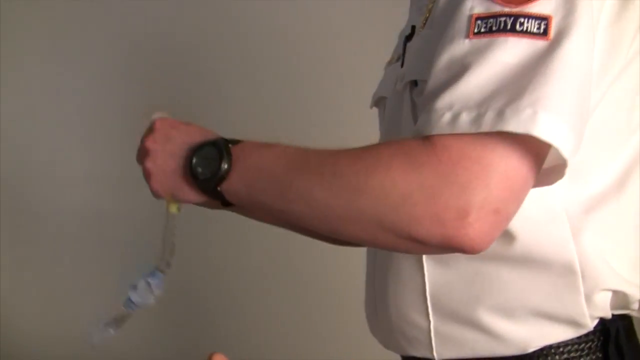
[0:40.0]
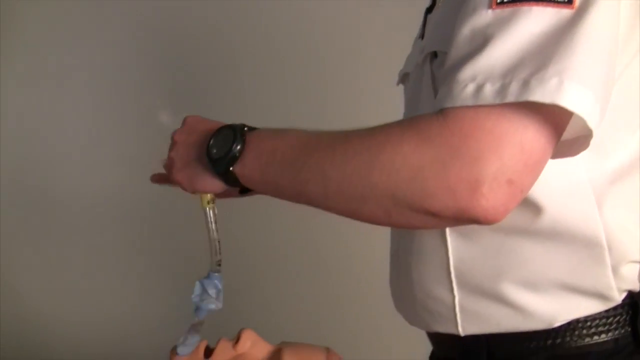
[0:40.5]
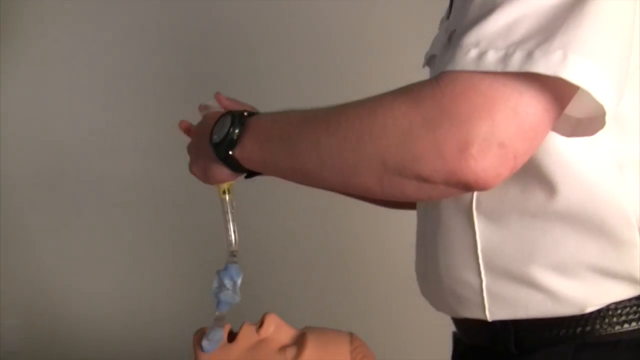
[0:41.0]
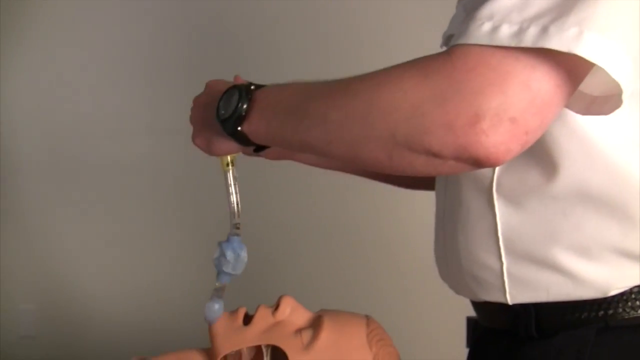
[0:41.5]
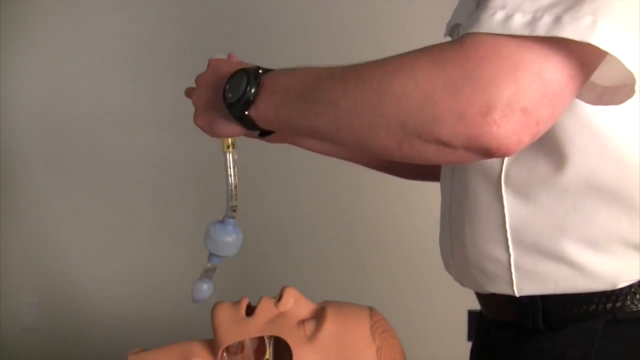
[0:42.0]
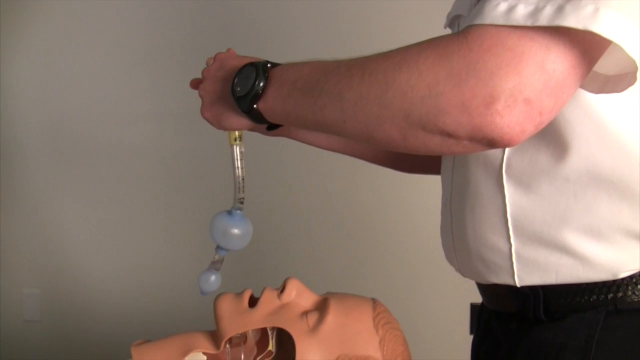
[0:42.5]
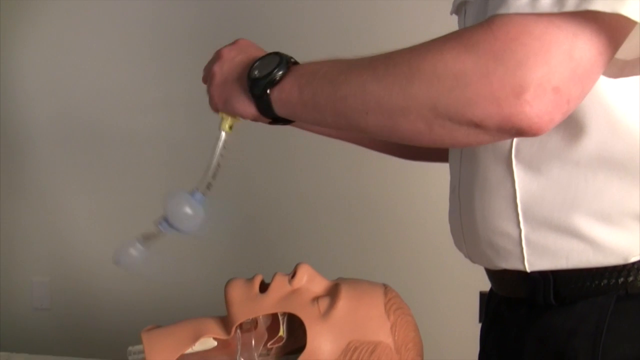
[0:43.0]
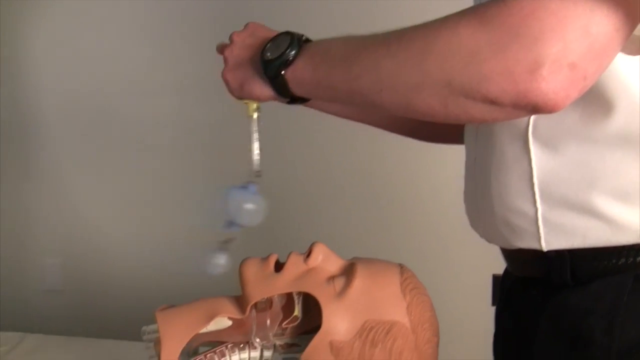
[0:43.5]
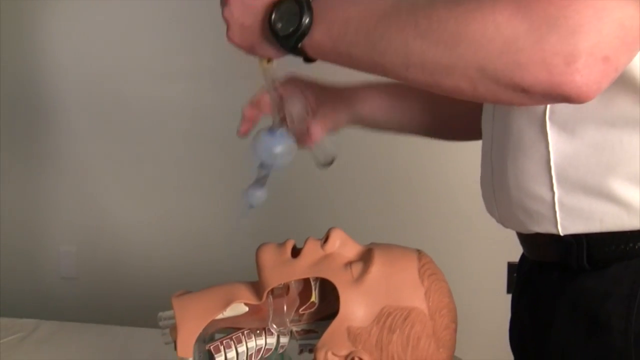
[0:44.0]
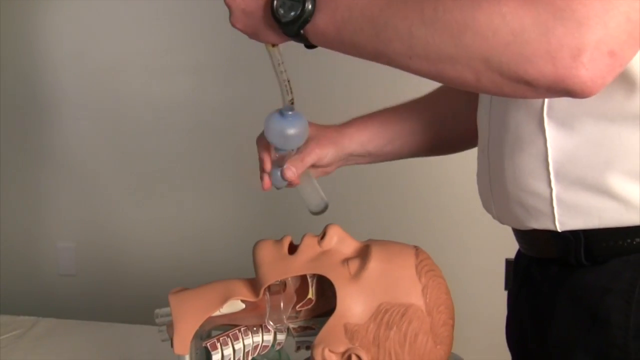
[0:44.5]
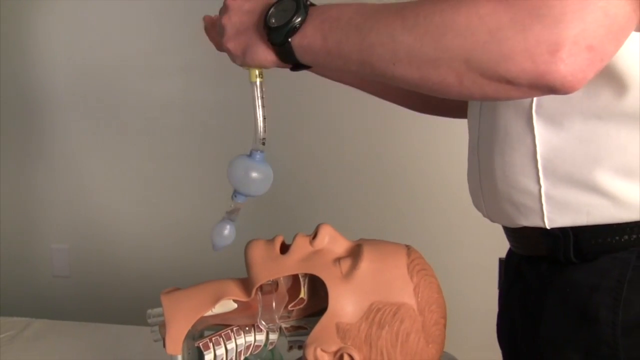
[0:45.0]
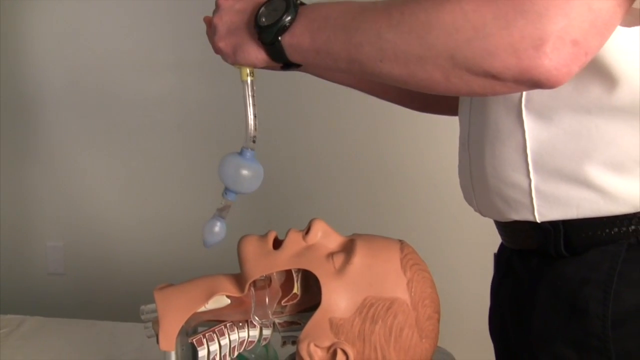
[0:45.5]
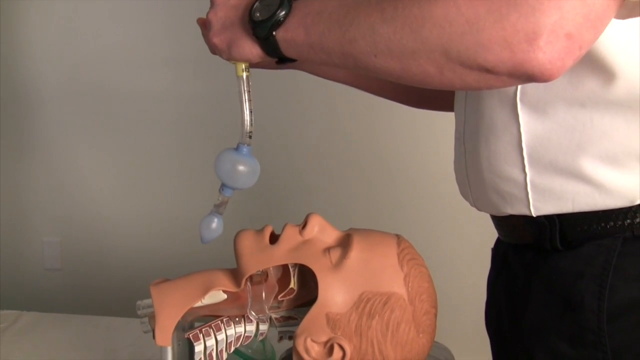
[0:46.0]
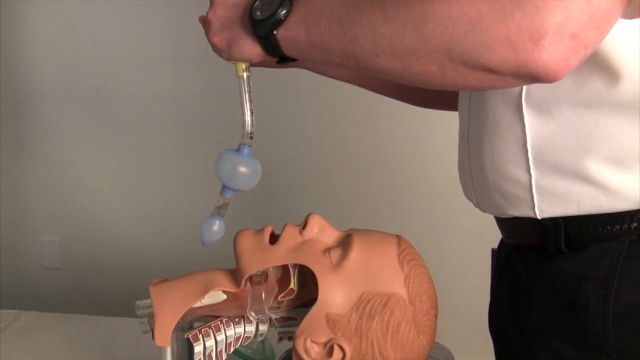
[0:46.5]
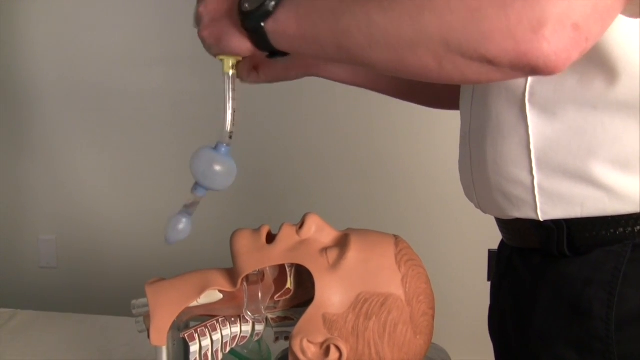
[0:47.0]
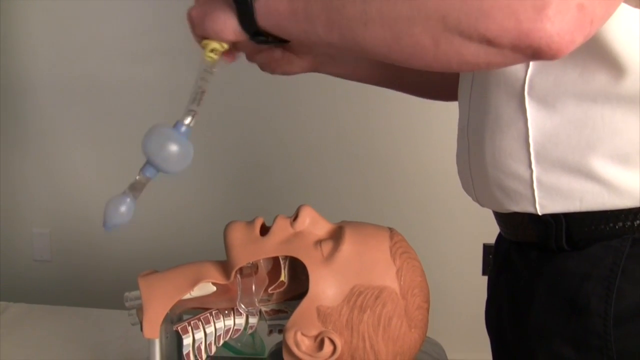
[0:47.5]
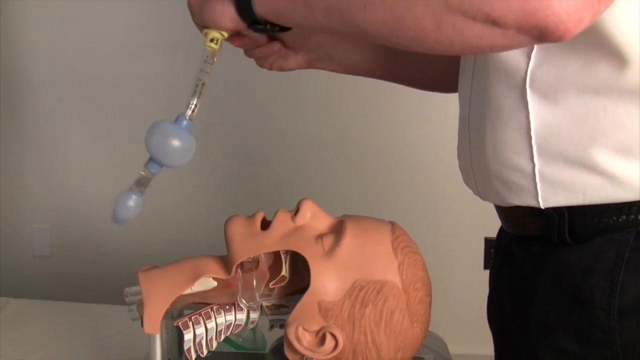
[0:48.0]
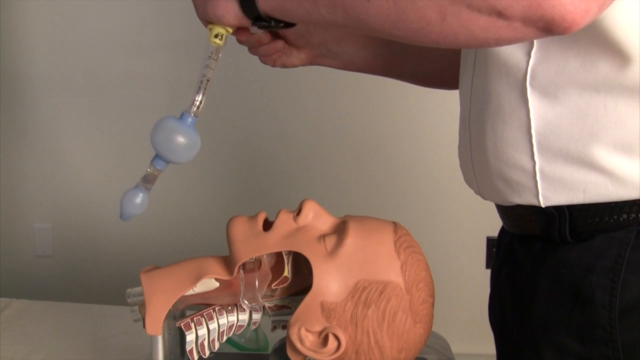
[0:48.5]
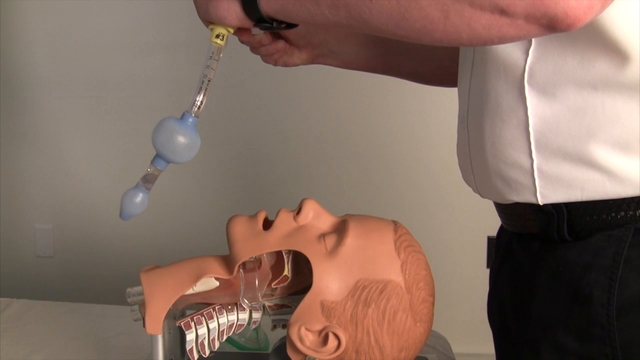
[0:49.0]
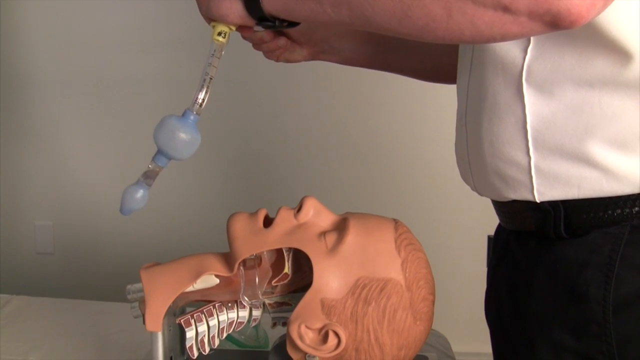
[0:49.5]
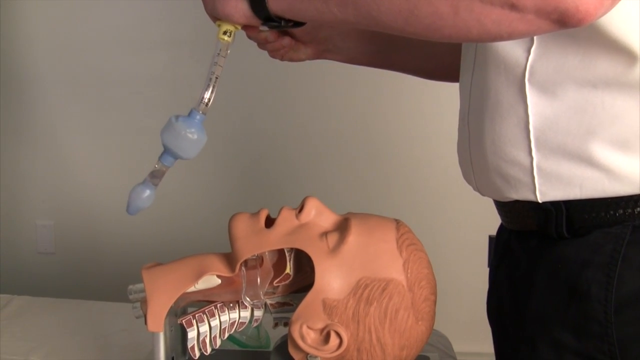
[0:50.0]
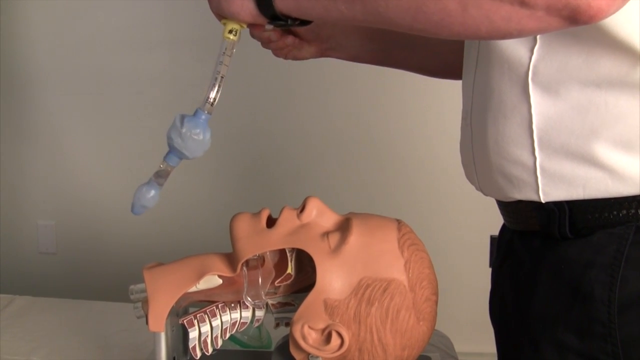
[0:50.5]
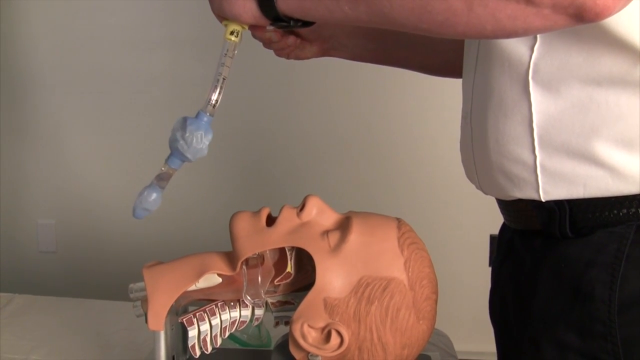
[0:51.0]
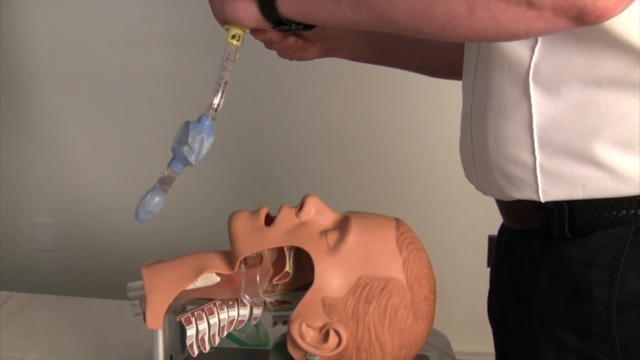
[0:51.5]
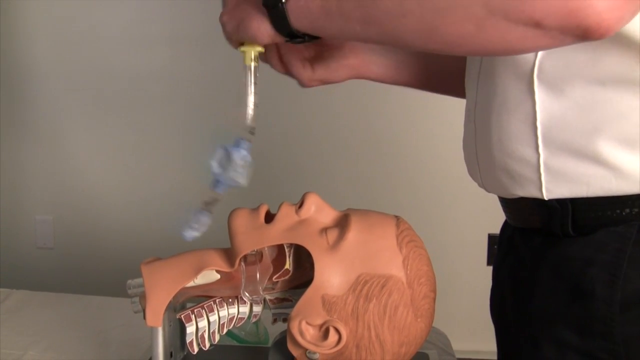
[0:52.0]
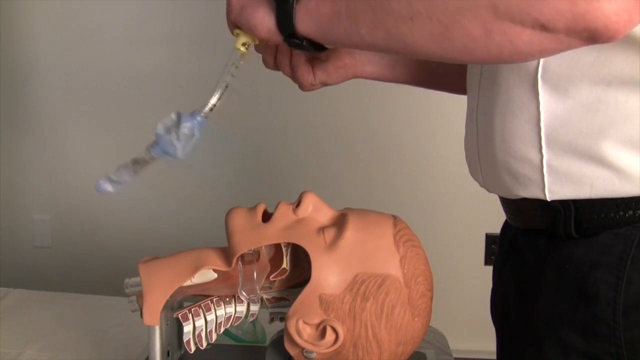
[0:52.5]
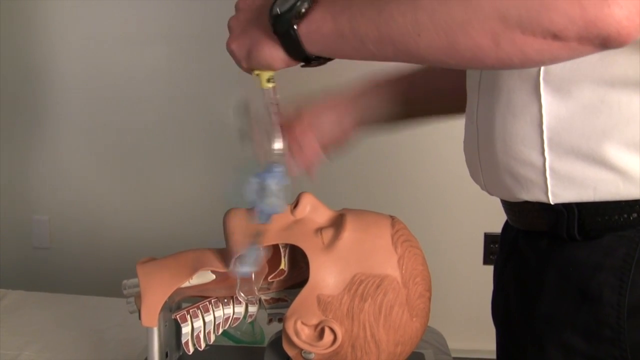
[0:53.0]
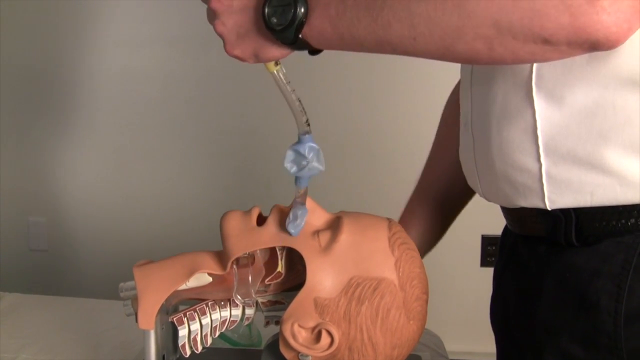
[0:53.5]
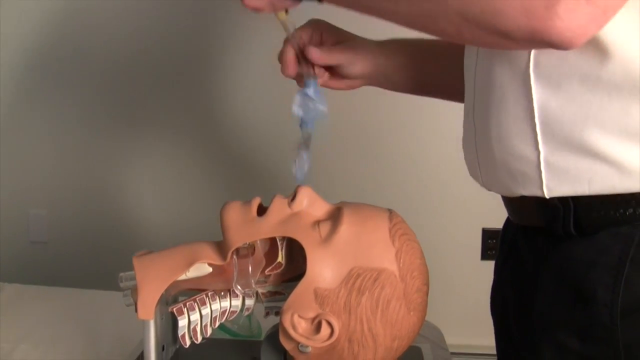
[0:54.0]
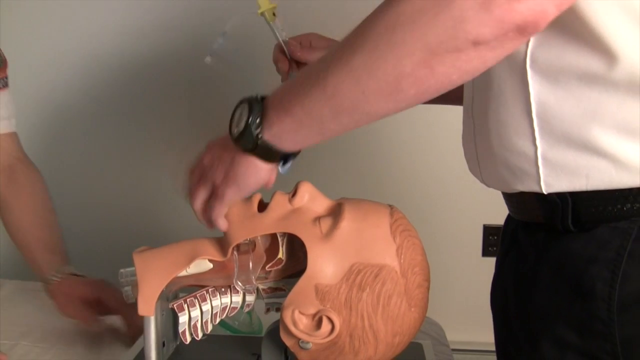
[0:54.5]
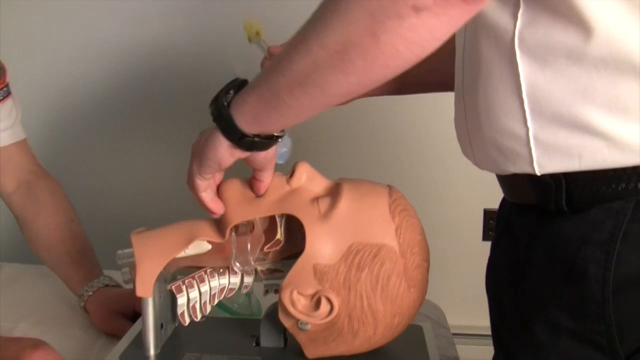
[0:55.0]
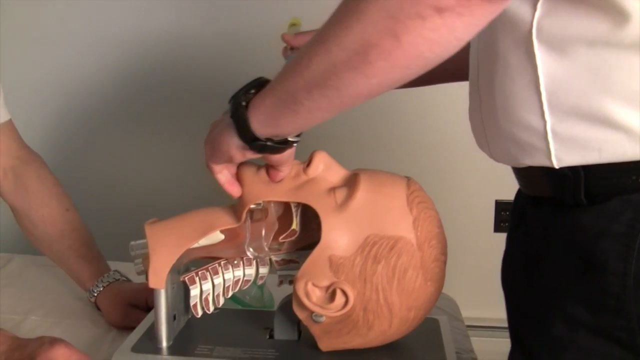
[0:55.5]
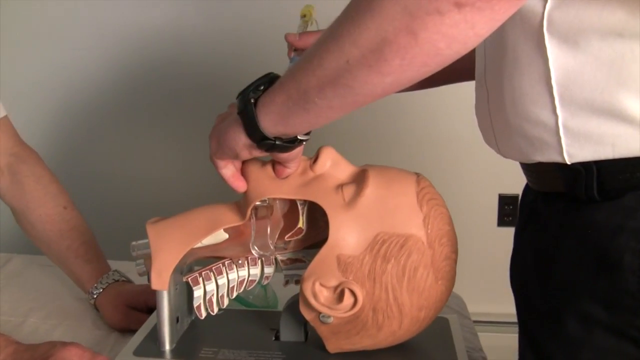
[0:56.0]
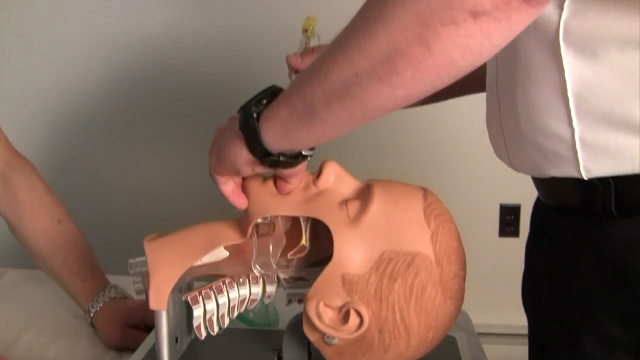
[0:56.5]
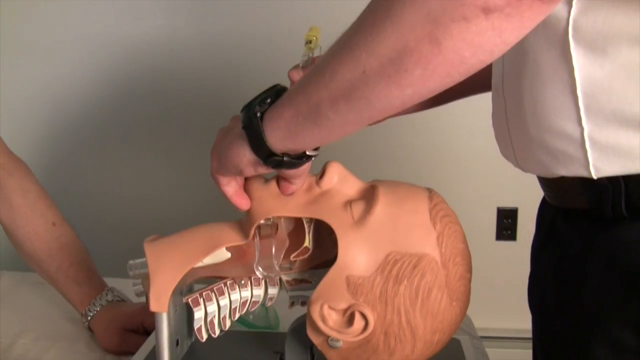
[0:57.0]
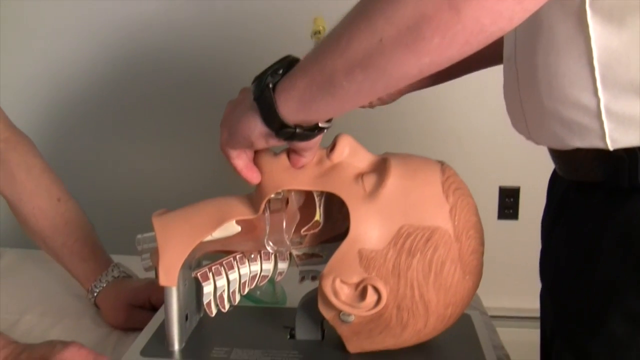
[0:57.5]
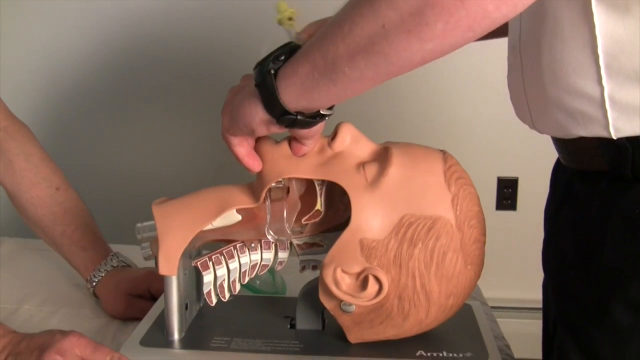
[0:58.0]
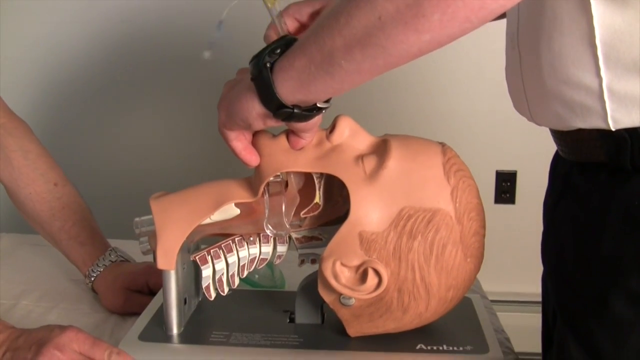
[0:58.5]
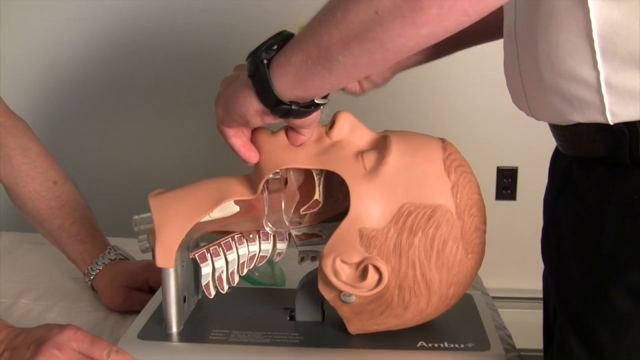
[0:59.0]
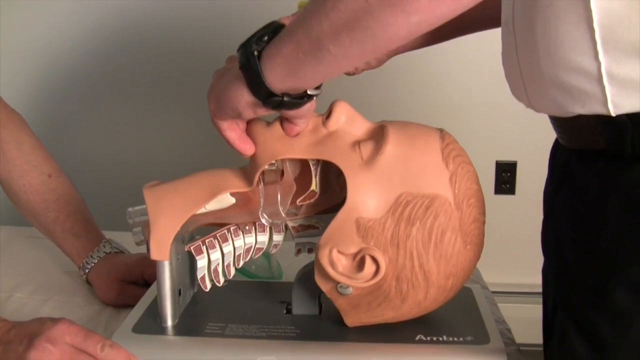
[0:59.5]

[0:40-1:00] On the right side of the frame, a person is visible from the torso up to the shoulders, facing left. They wear a white short-sleeved shirt with a black patch on the left shoulder that reads "Deputy Chief" in white. Both hands are held outward in front of them, holding what looks like a transparent tube connected to a light blue body, with another tube coming out of it. The left forearm is in front of the waist, and there appears to be a black watch on the left wrist. Suddenly the middle of the tool takes on a bulbous light blue shape, and then the bulbous shape starts wrinkling up as the person handles its tip. A mannequin head appears at the bottom middle of the frame, and there appears to be another person on the left side whose left hand holds the bottom of the upward-facing mannequin head. The end of the tube is stuffed into the mannequin's mouth. The mannequin's head, shown only from the throat up, faces upwards with its left side toward the camera; the left cheek has been cut out, revealing the spine and the other side of the mouth.